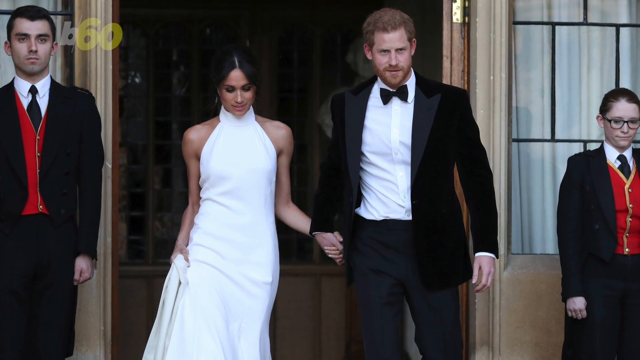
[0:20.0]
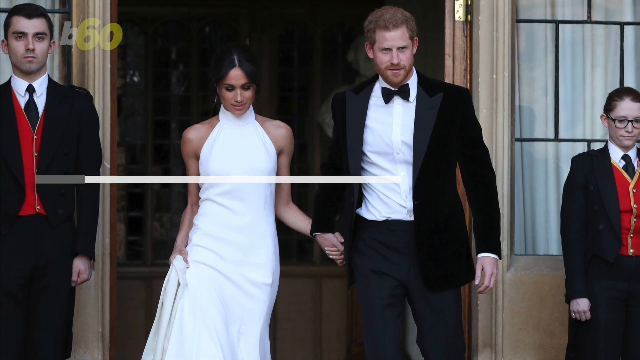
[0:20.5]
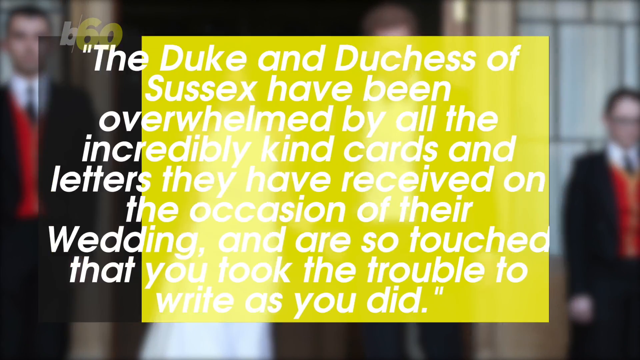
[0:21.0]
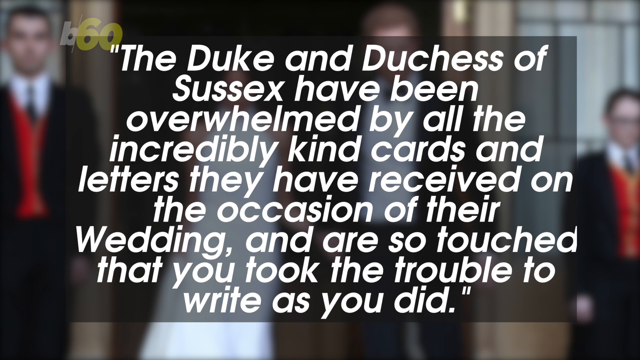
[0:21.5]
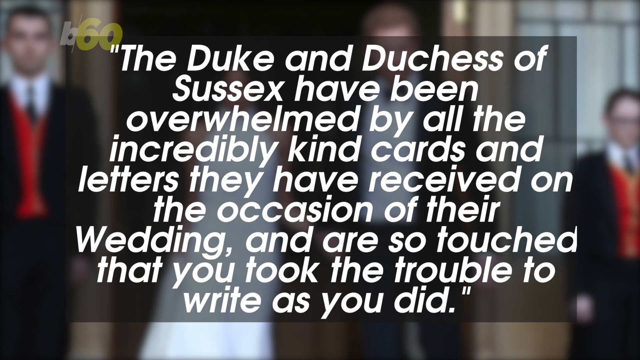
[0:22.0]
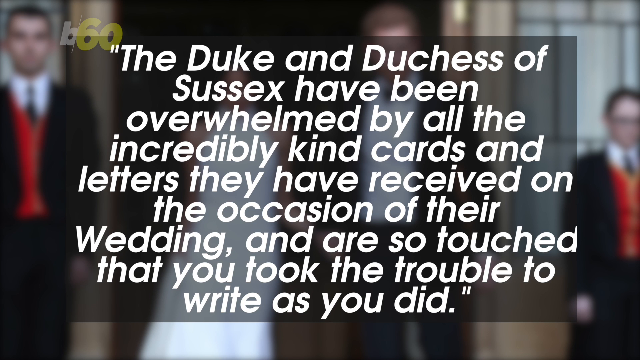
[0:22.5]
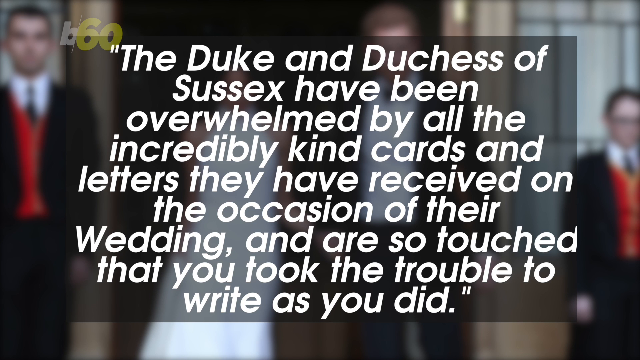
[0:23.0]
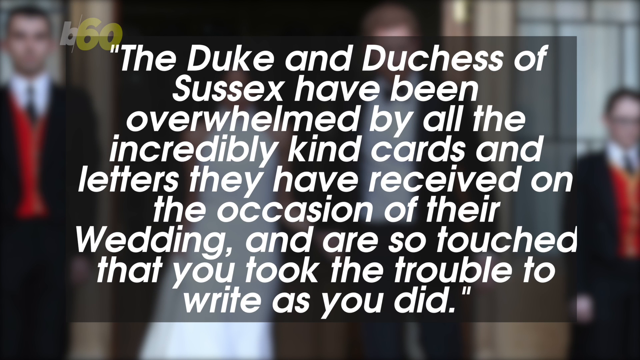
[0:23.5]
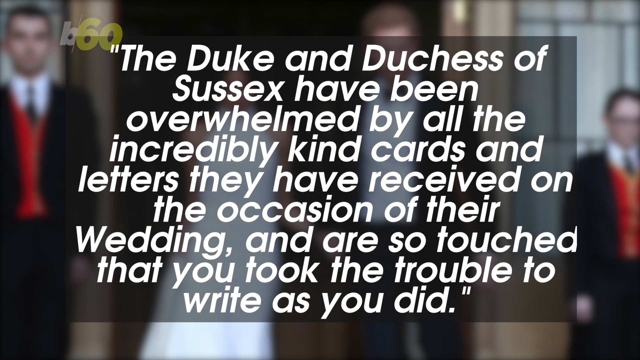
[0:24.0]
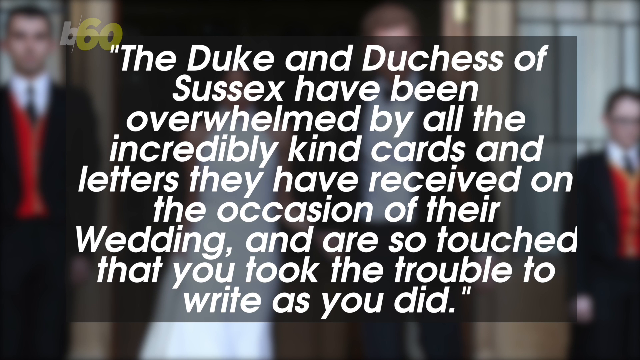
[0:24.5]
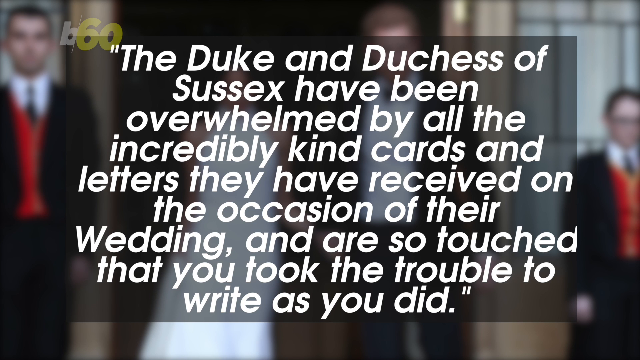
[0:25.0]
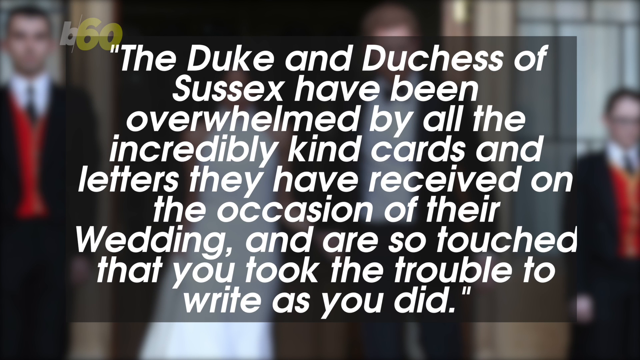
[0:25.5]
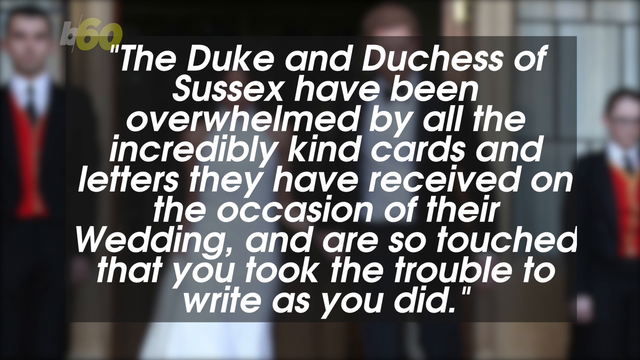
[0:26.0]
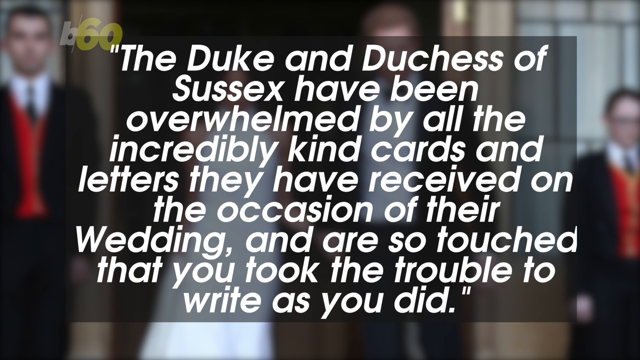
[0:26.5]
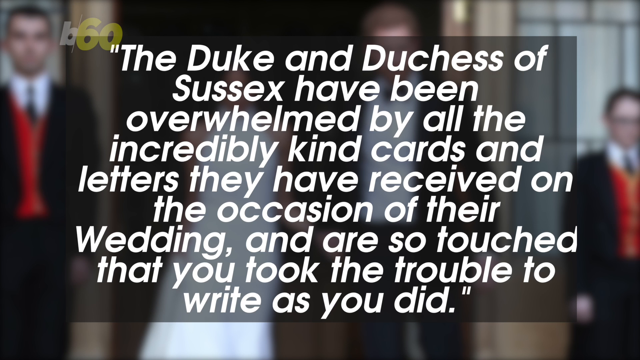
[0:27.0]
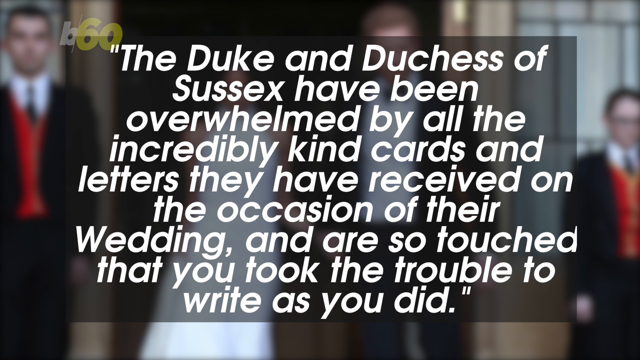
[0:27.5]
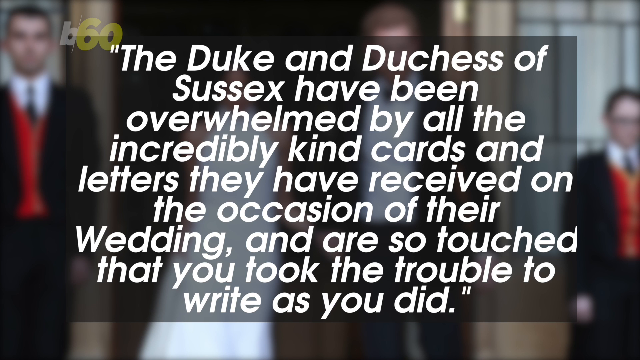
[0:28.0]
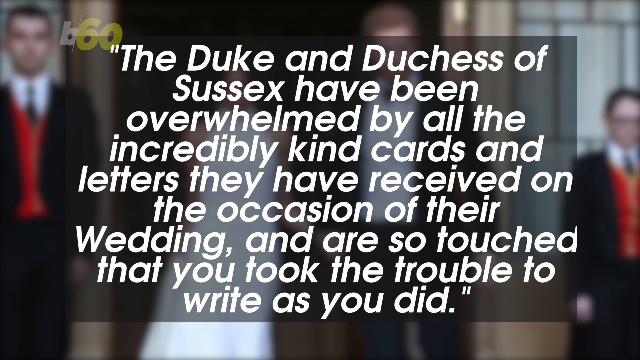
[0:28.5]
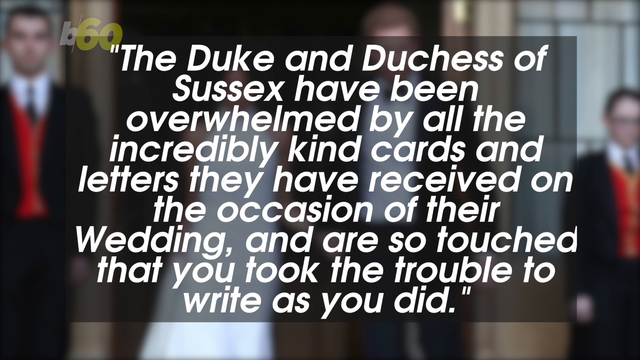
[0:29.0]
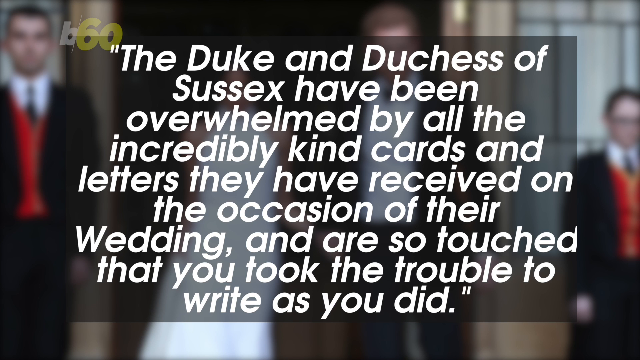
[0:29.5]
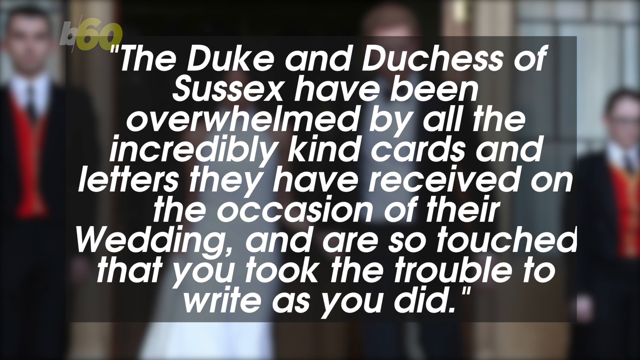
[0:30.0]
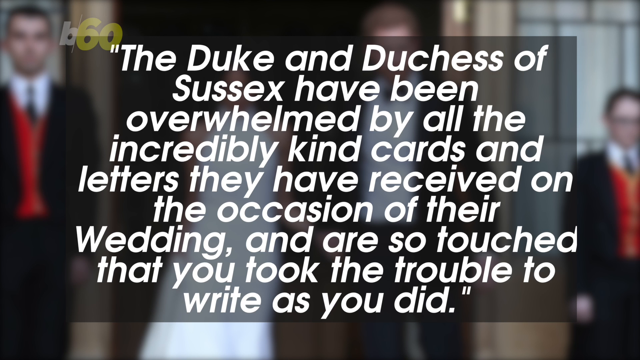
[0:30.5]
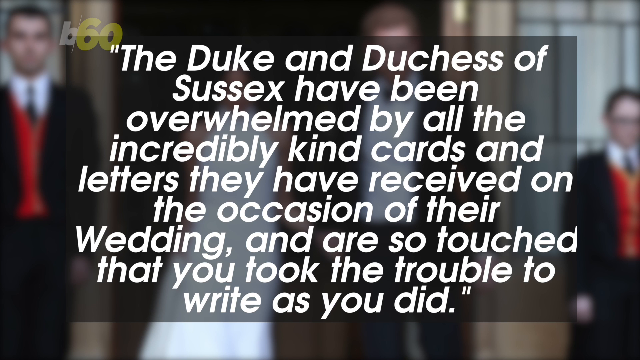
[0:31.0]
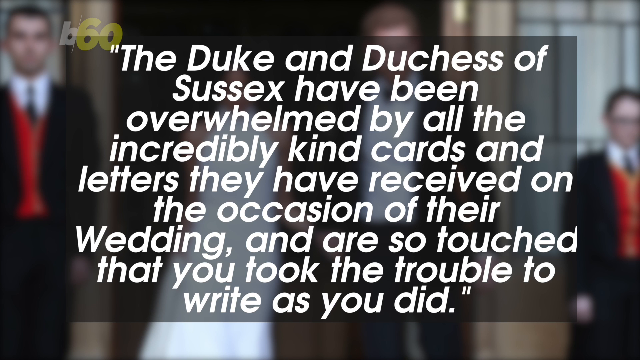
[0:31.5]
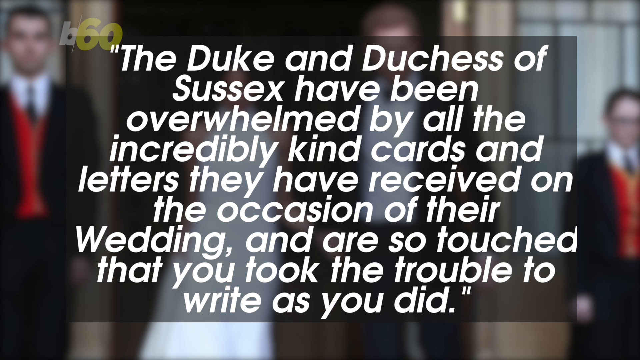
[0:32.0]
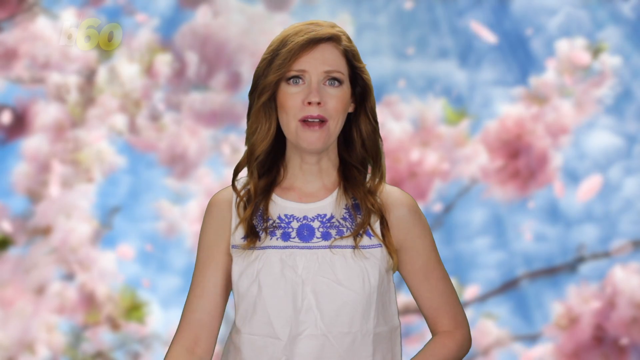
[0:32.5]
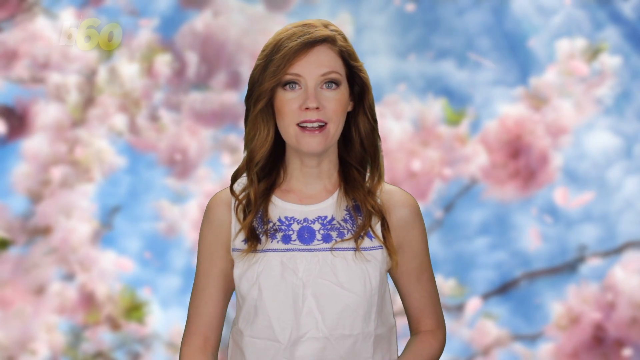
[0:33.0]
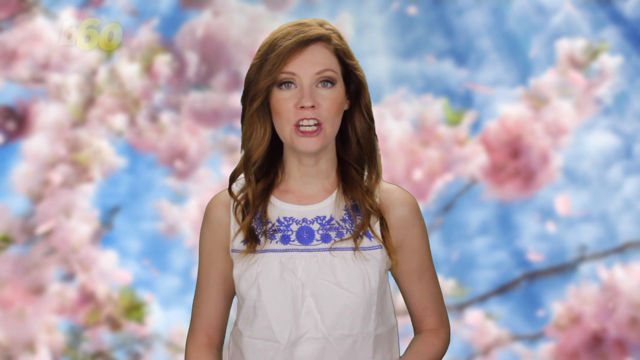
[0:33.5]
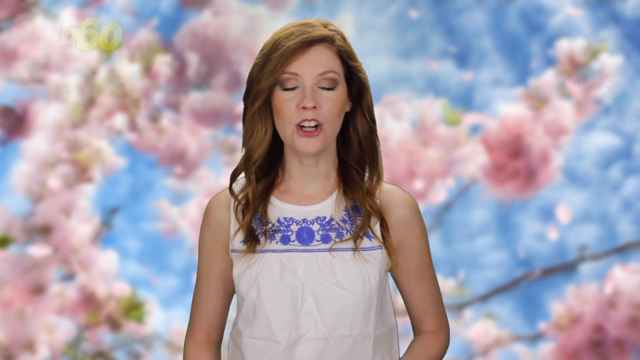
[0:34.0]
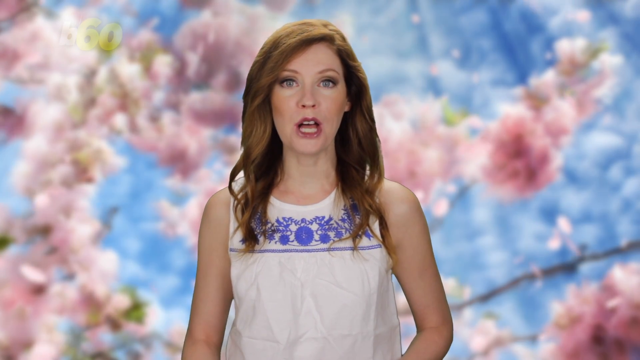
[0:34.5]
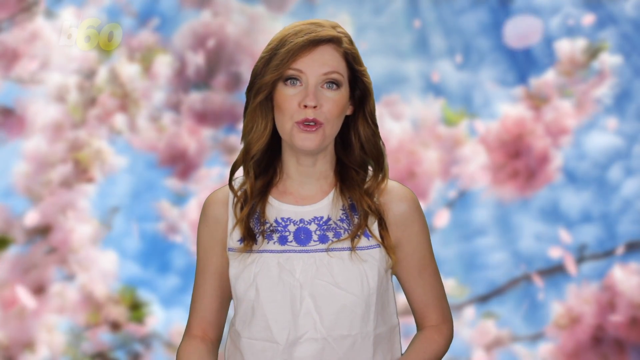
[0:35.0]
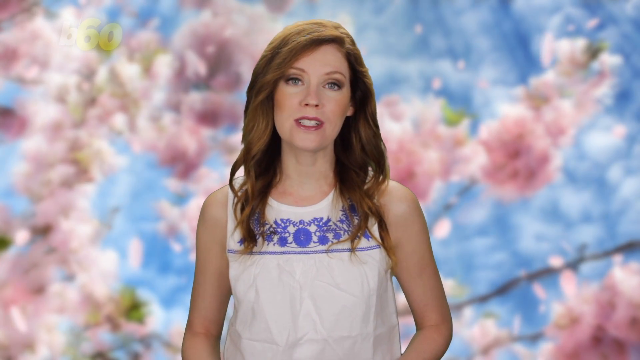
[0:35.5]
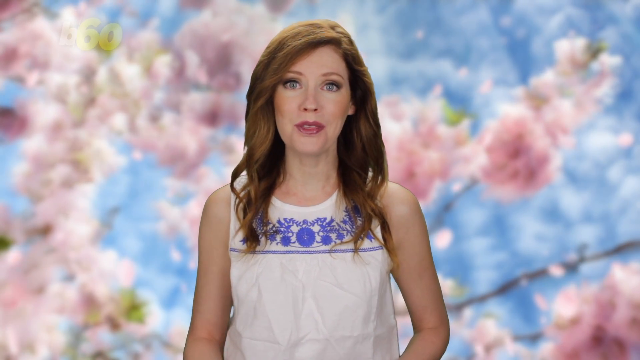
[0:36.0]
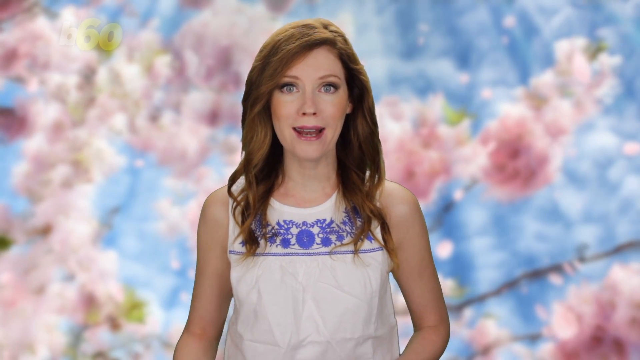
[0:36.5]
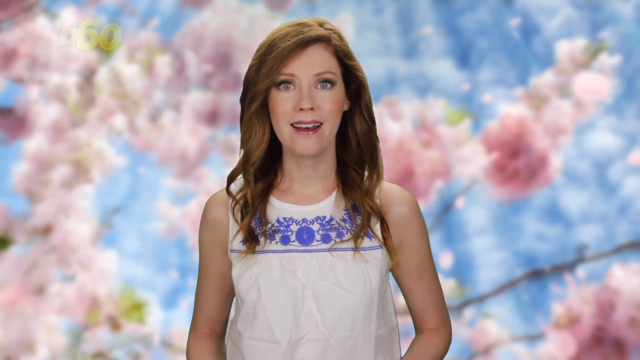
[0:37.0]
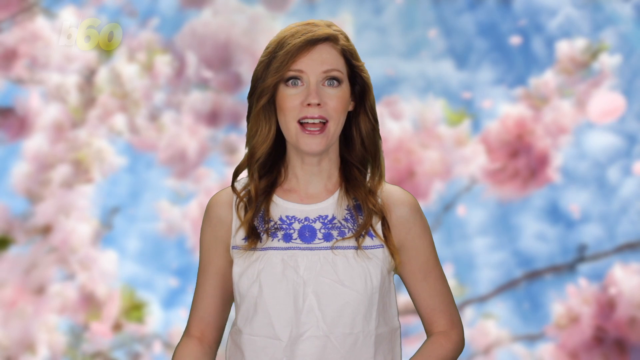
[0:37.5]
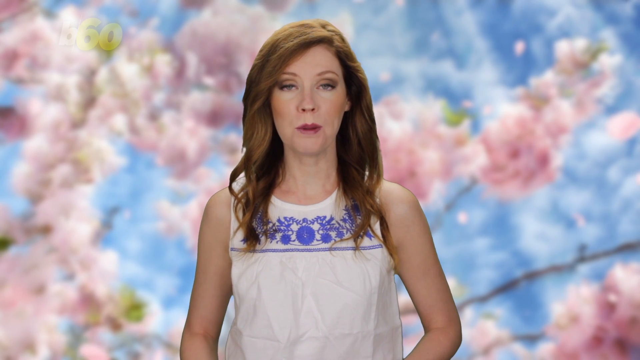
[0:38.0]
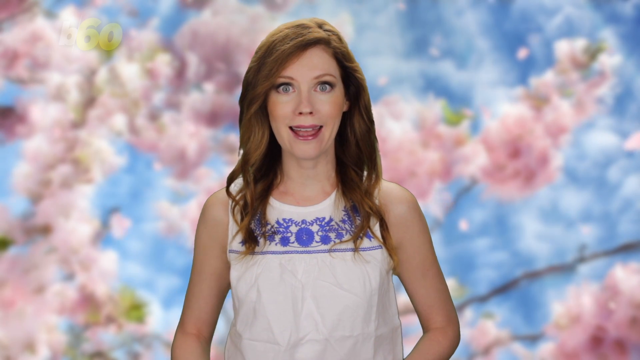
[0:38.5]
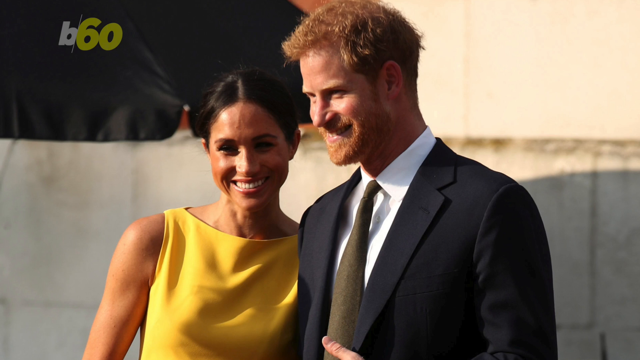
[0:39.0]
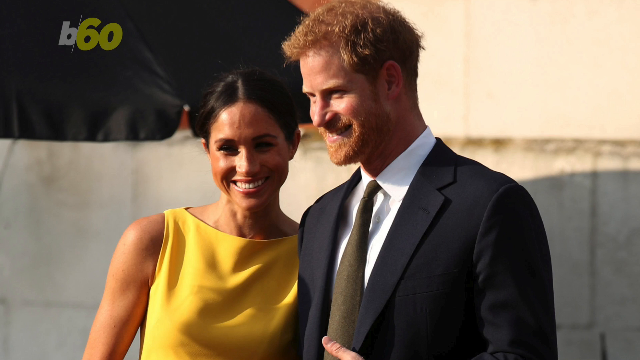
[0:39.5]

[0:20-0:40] The prince and his bride walk down some steps before text flashes on the screen: "The Duke and Duchess of Success have been overwhelmed by all the support." A female anchor from Buzz 60 then appears, standing behind a huge, flowery screen. A card shows what looks like the words of the prince and his wife thanking everyone for their support, but it is hard to read because everything flashes by so fast. Various pictures show the prince and his wife looking happy as they go around. People who seem to be subordinates stand on the side as if at attention.